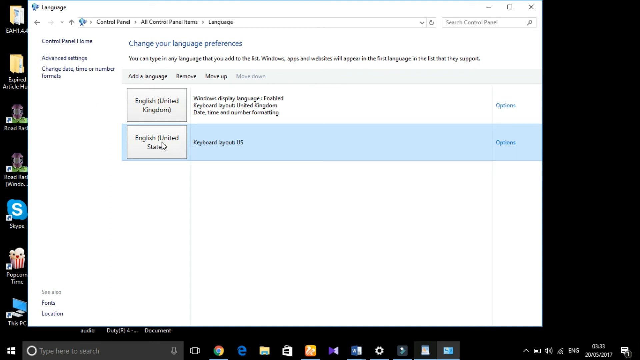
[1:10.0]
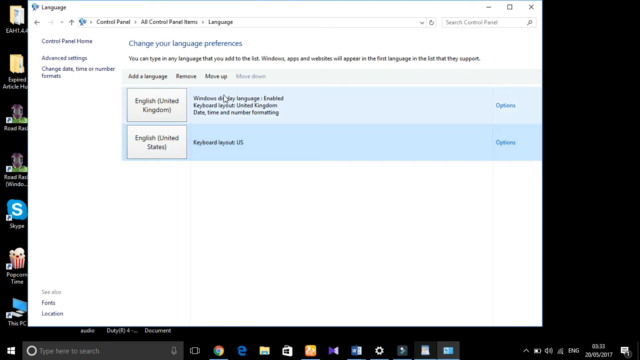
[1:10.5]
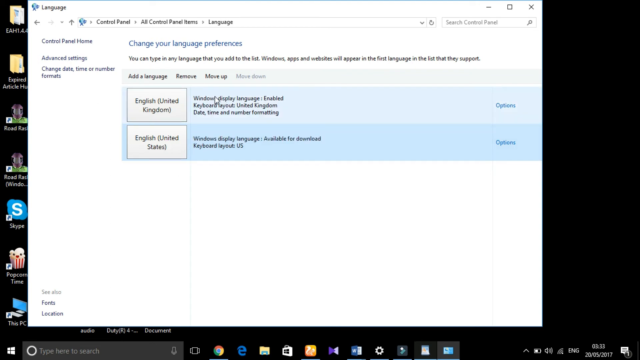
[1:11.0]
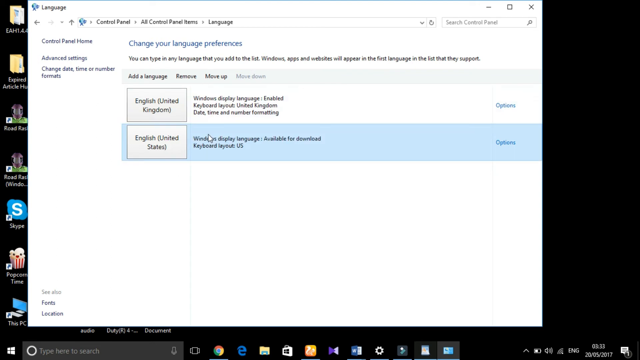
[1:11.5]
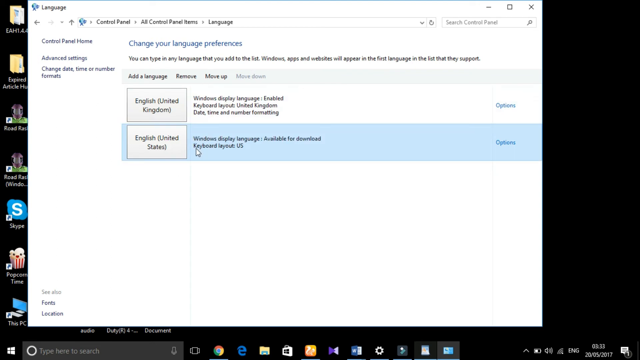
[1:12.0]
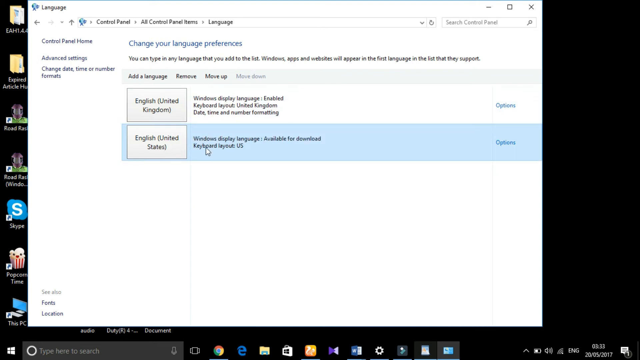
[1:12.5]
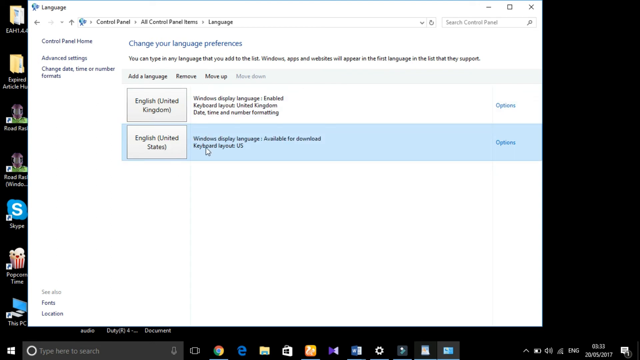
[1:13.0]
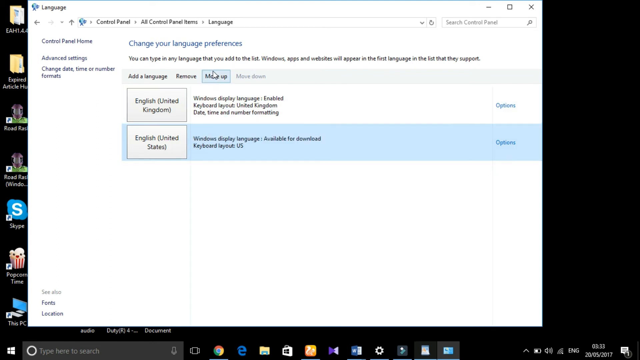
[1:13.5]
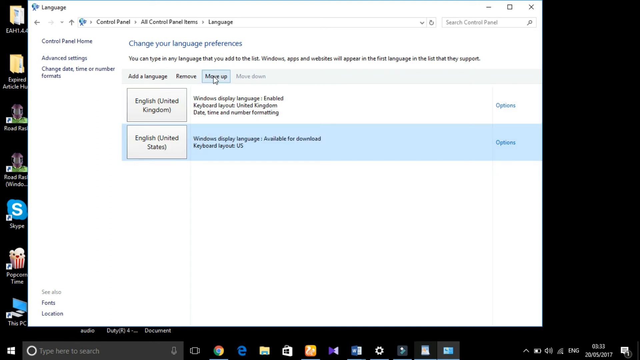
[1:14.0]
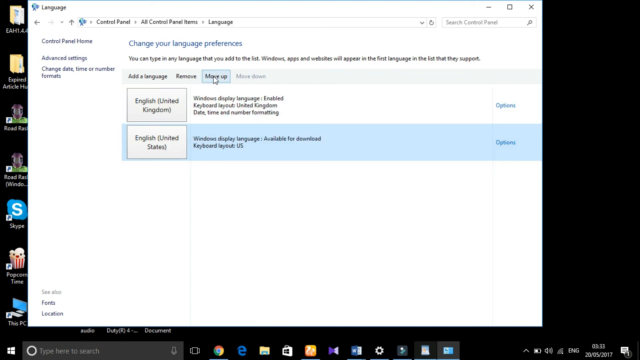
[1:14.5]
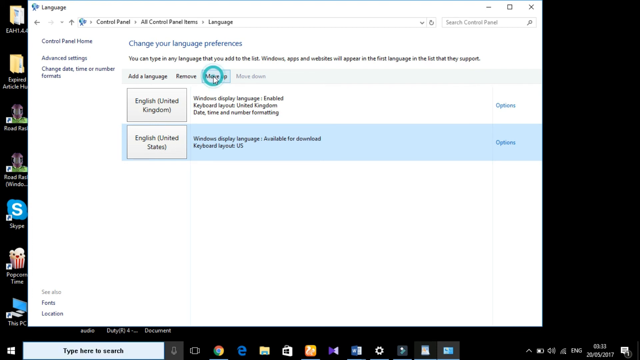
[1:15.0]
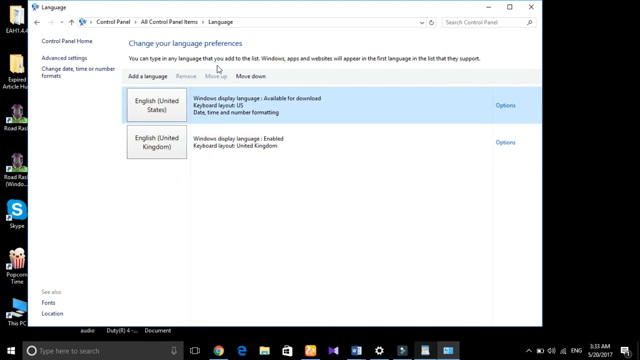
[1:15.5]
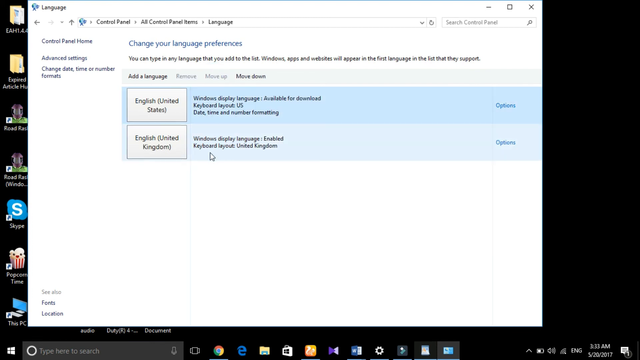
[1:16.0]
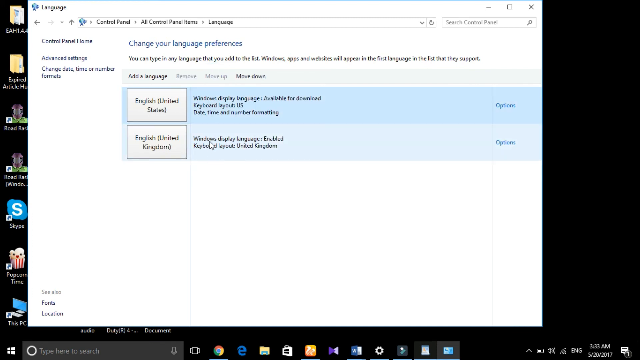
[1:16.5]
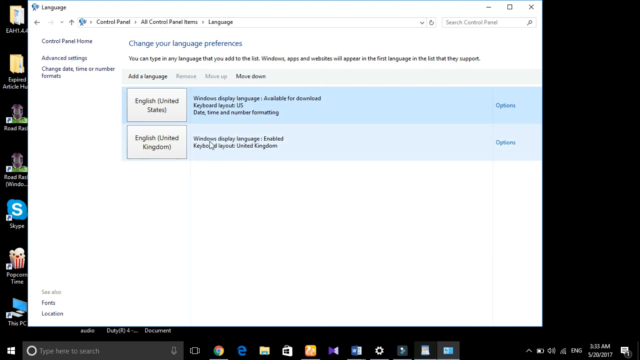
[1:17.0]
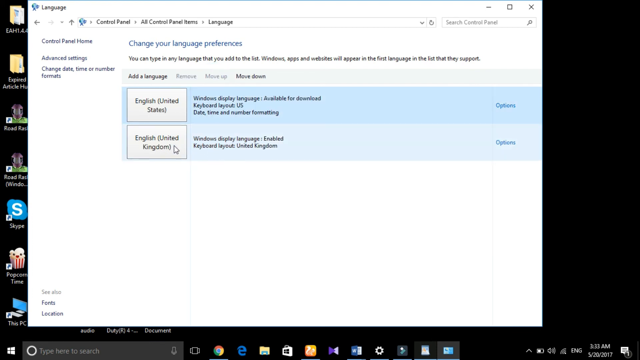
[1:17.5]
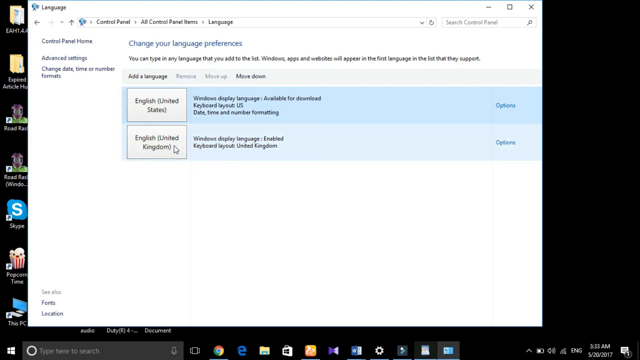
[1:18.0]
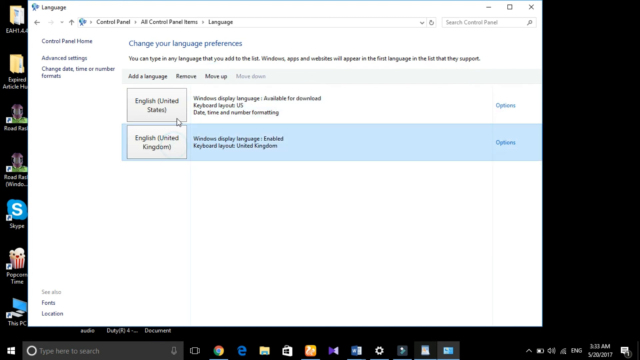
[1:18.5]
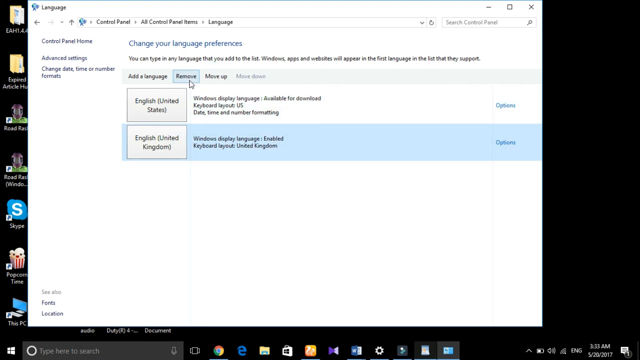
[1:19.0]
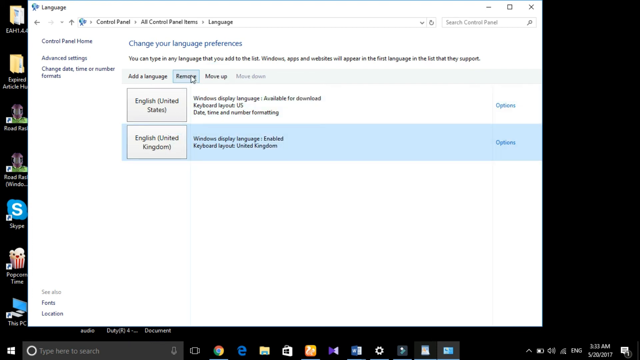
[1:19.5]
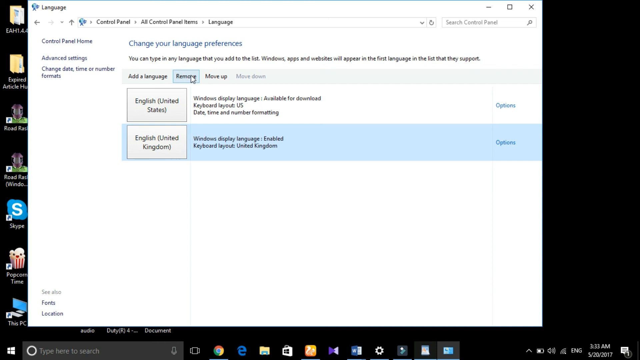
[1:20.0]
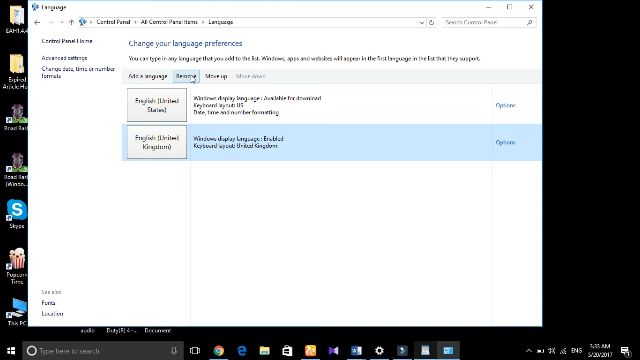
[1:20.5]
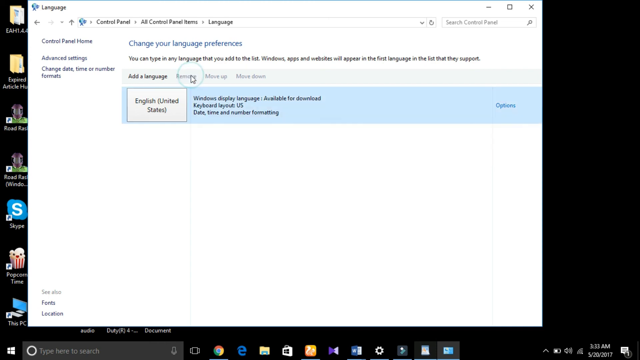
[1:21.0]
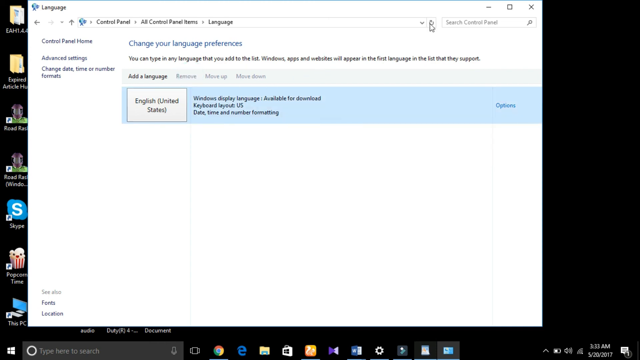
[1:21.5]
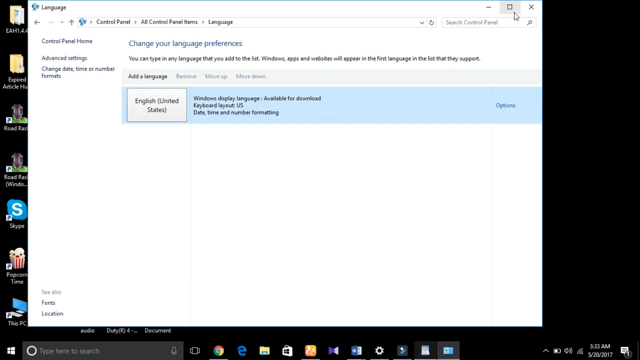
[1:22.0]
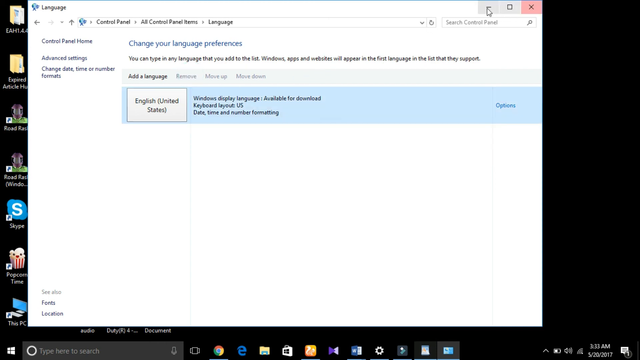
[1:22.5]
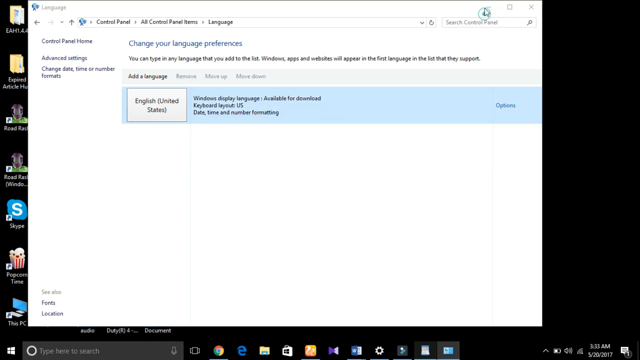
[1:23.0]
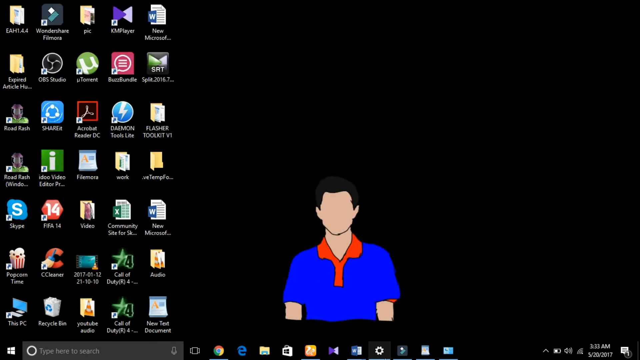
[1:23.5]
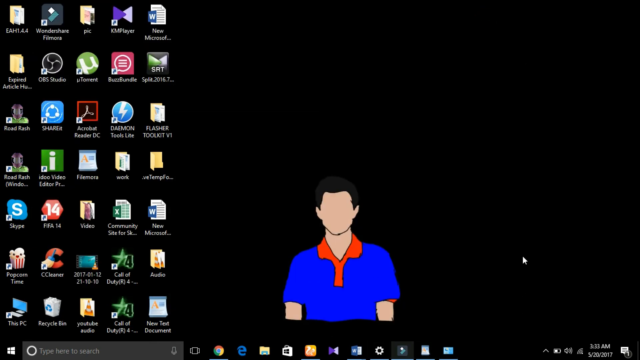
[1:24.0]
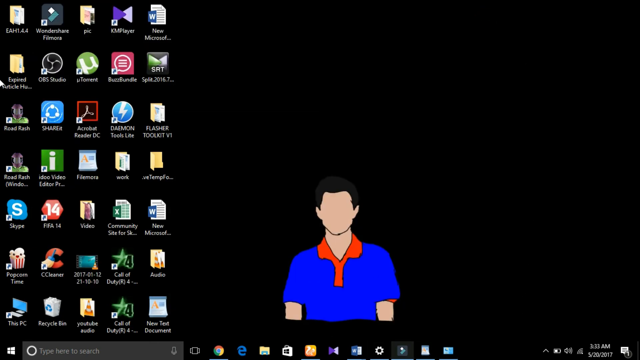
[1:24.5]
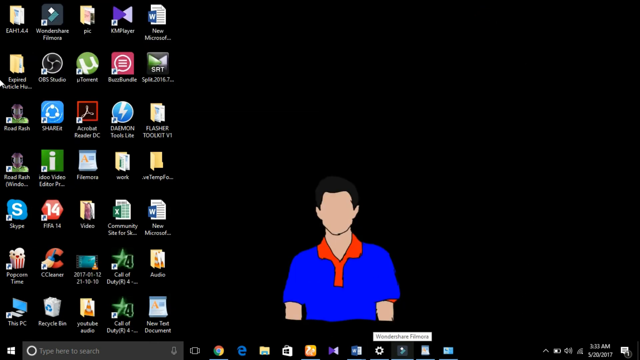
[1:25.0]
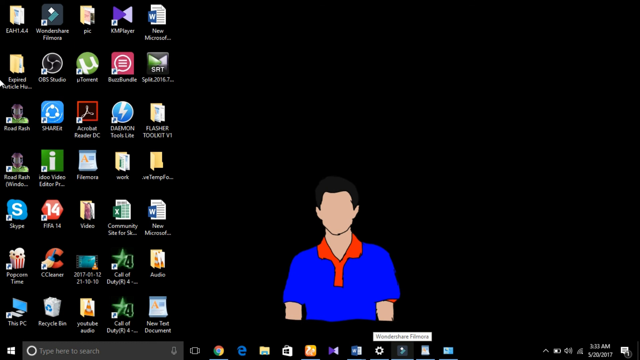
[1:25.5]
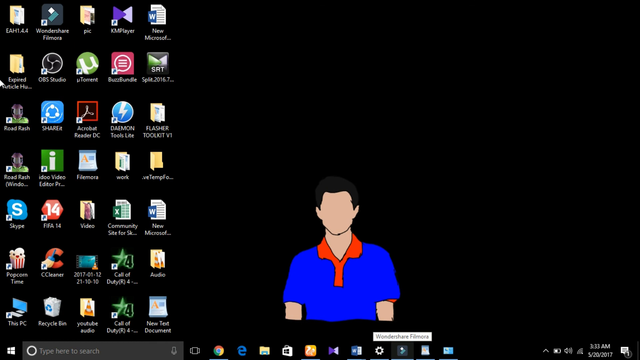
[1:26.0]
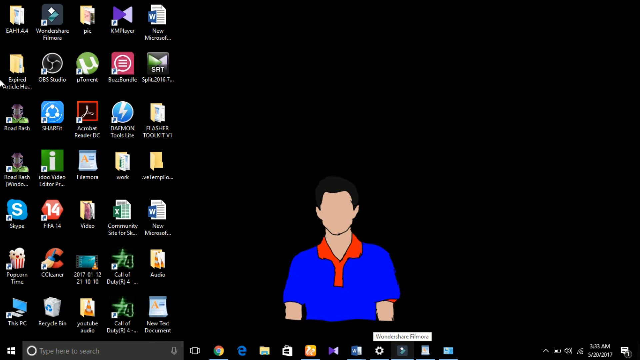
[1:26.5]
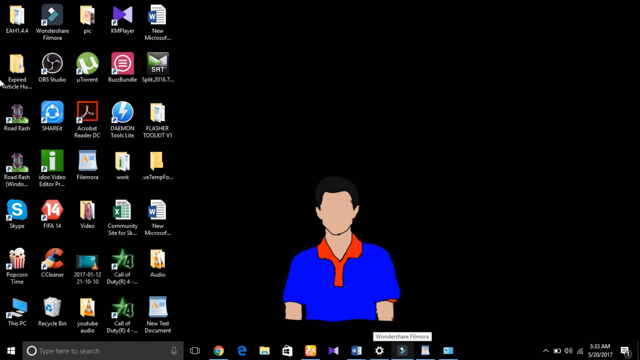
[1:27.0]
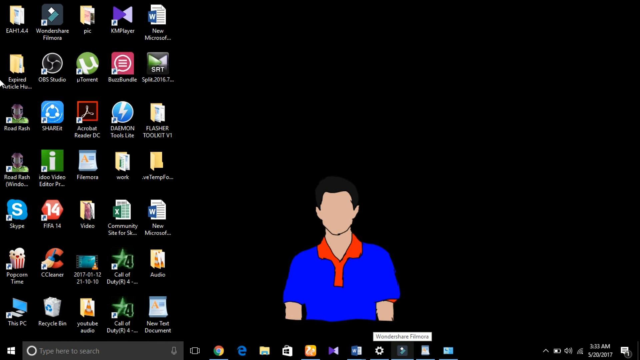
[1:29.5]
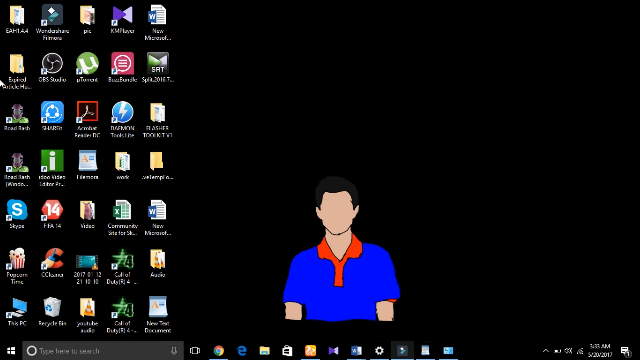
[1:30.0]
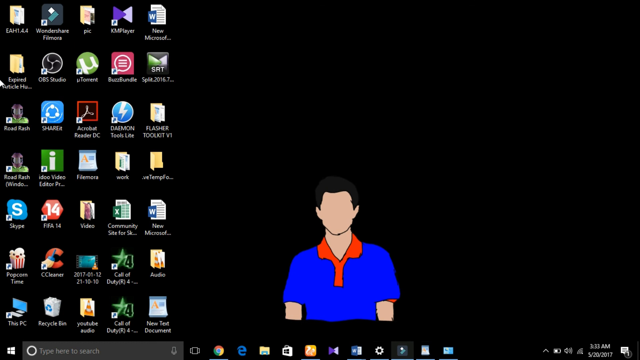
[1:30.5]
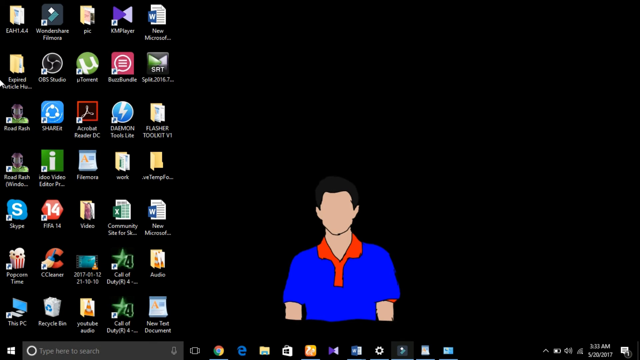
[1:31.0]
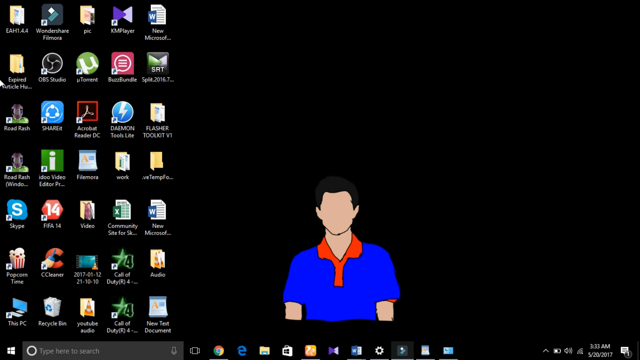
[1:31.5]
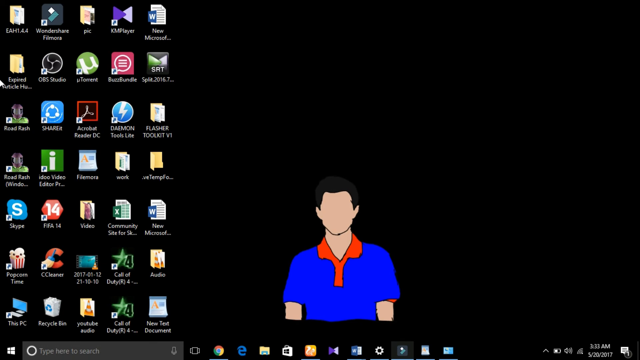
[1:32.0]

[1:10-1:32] The cursor moves to the English United Kingdom description on the right side, then back down to the English United States one, showing its description. It then goes up to the third option, which says "move up", and clicks it. English United States now appears in a darker blue with English United Kingdom in a lighter blue underneath. The cursor hovers over English United States, highlights and clicks it, and then clicks the Remove button. The English United Kingdom option vanishes from the screen, and English United States is highlighted in blue. The mouse moves to the minimize symbol and clicks it, the window minimizes, and the home screen returns: the black desktop with the cartoon man avatar.